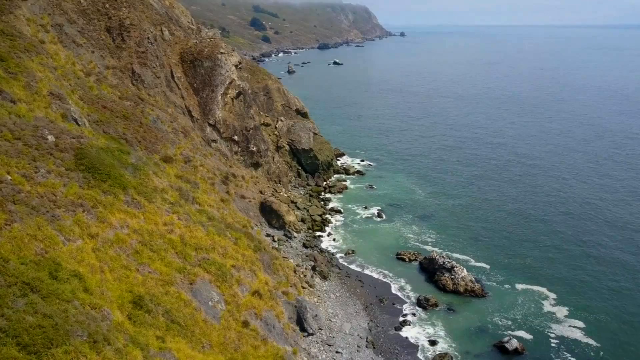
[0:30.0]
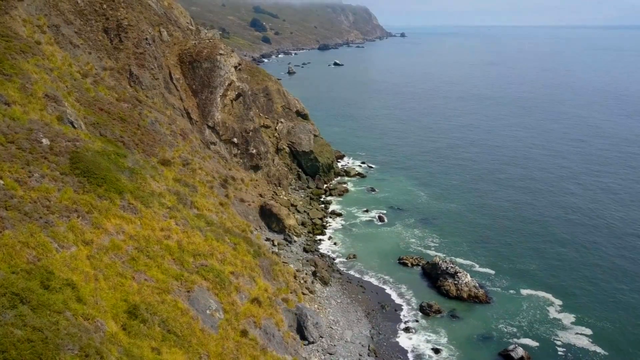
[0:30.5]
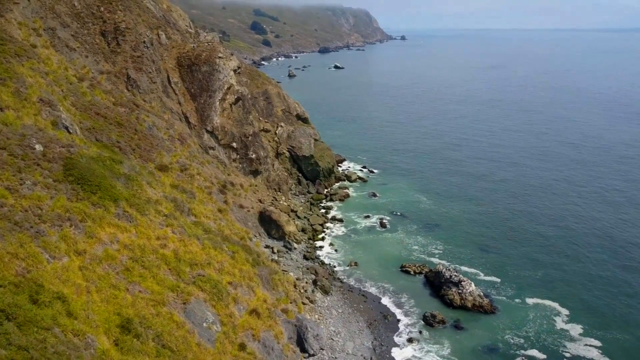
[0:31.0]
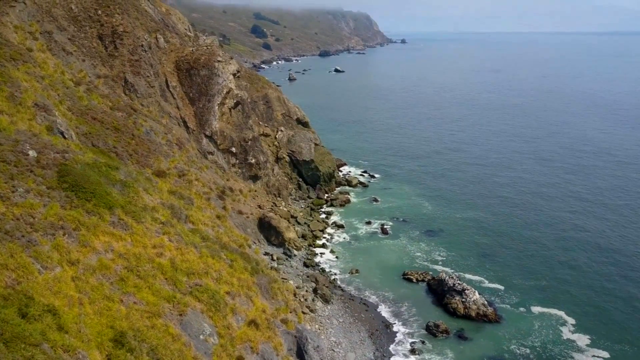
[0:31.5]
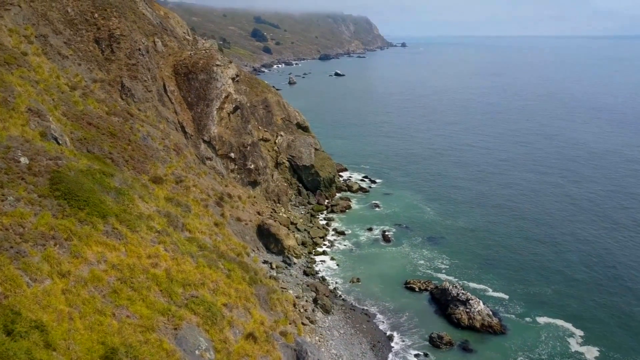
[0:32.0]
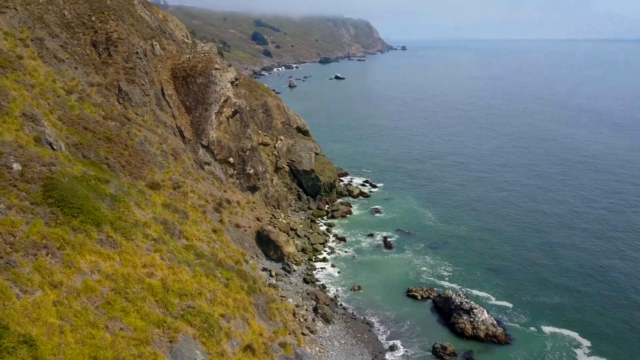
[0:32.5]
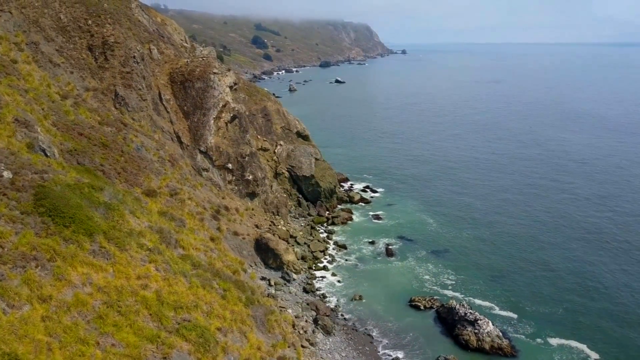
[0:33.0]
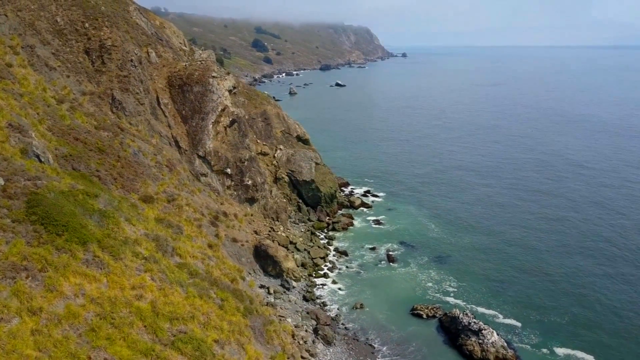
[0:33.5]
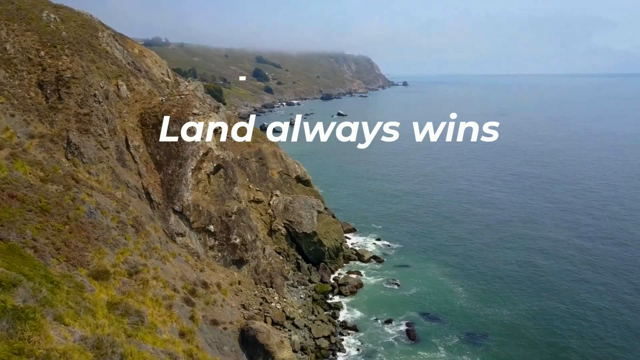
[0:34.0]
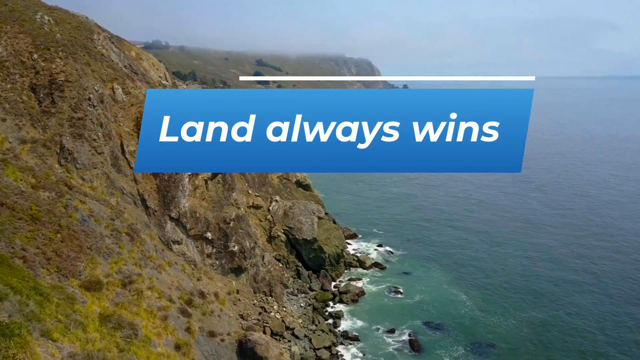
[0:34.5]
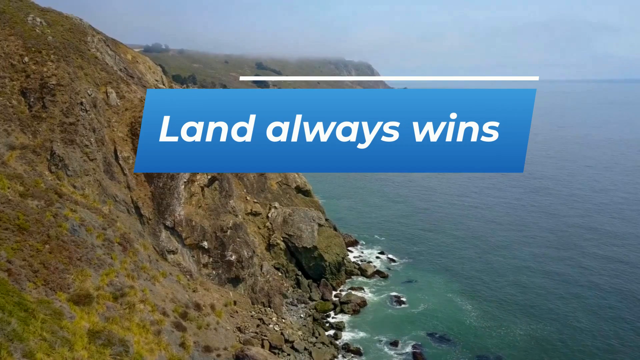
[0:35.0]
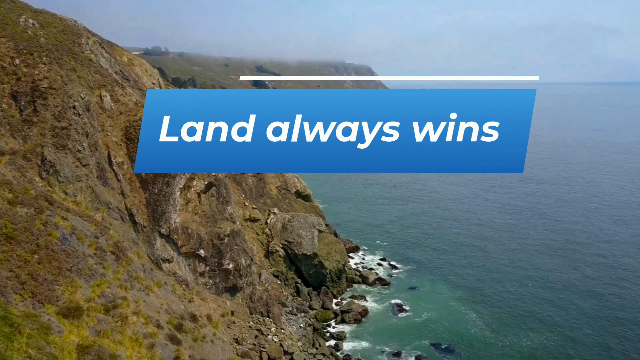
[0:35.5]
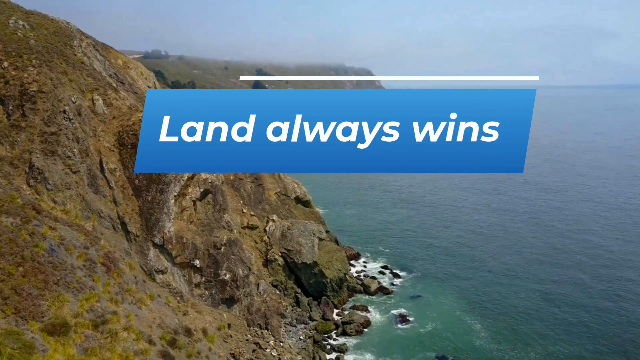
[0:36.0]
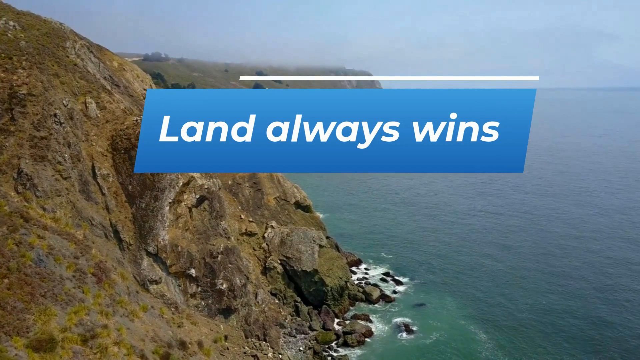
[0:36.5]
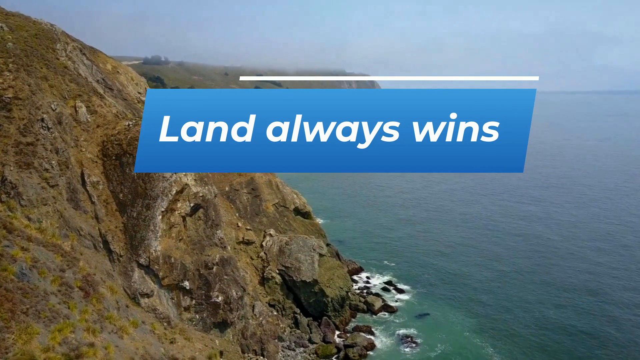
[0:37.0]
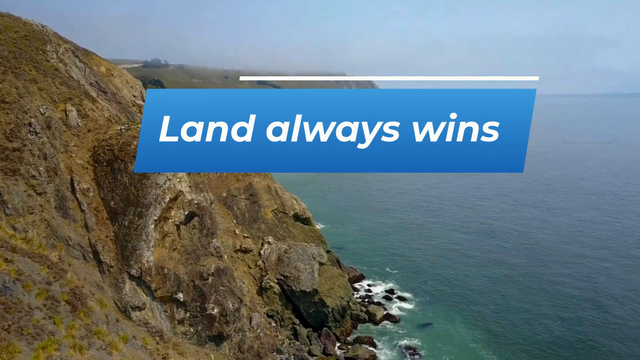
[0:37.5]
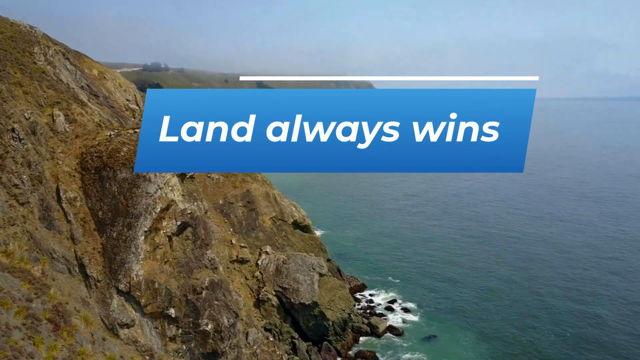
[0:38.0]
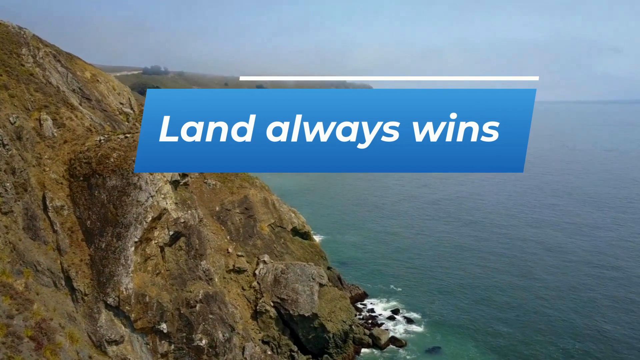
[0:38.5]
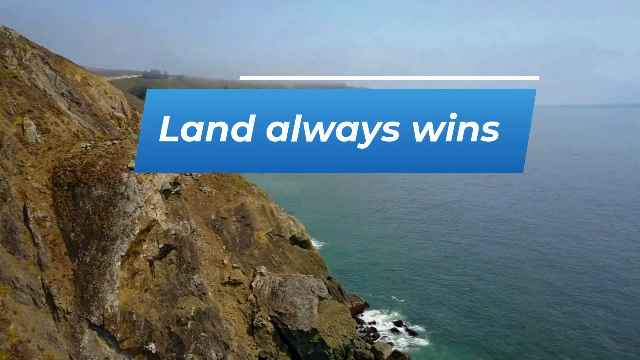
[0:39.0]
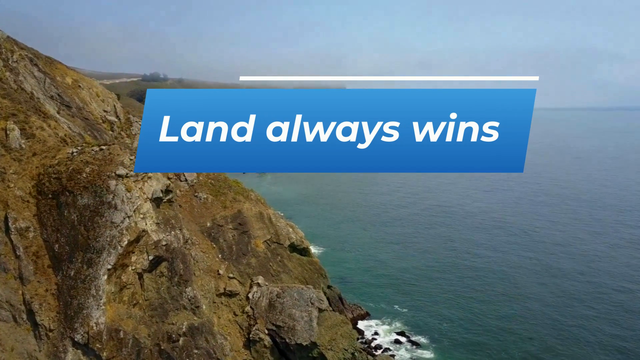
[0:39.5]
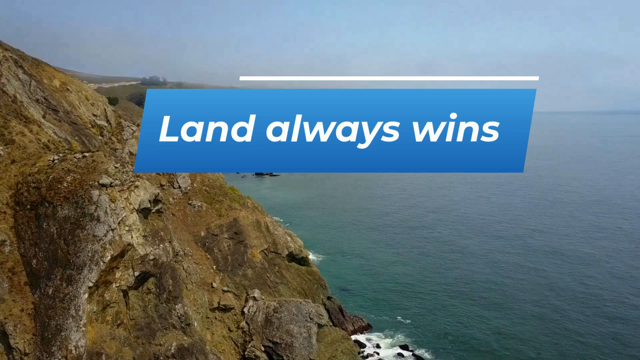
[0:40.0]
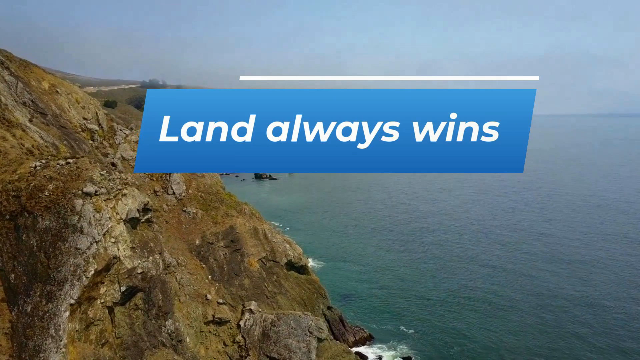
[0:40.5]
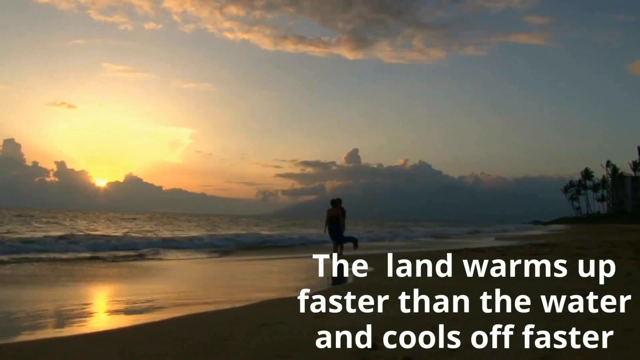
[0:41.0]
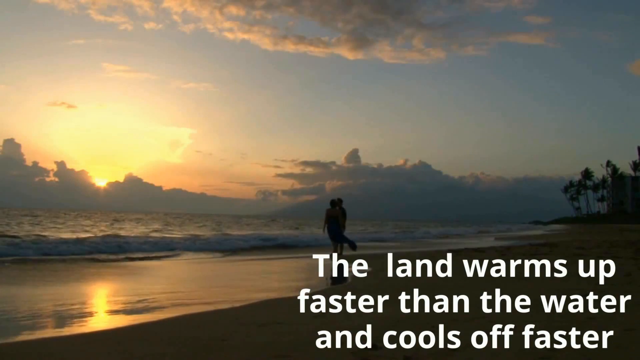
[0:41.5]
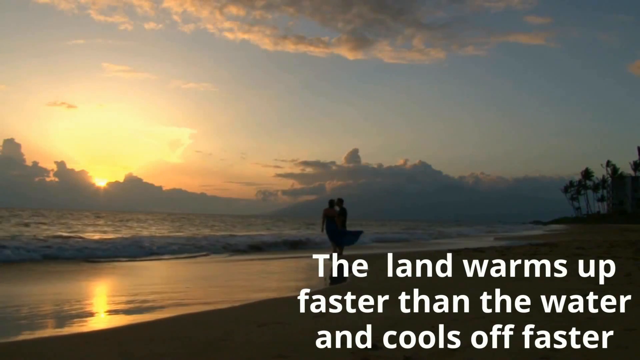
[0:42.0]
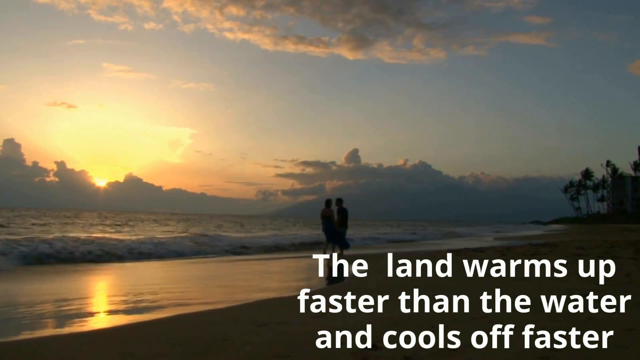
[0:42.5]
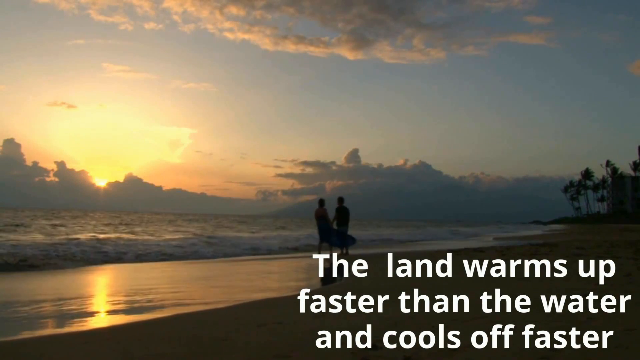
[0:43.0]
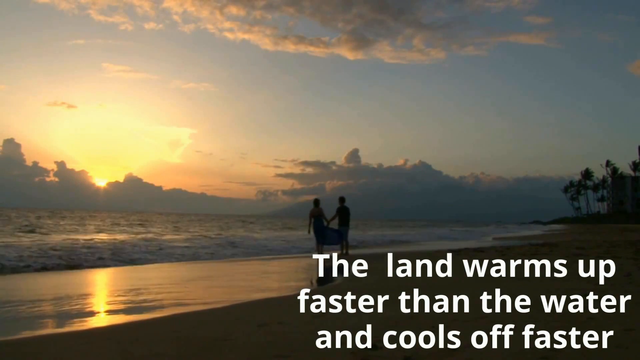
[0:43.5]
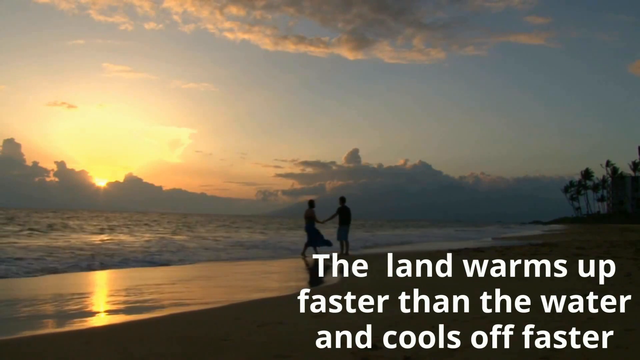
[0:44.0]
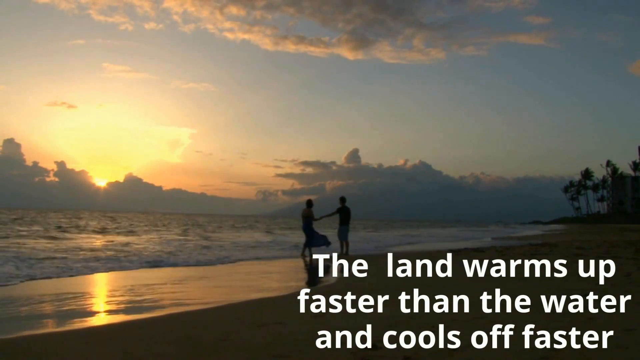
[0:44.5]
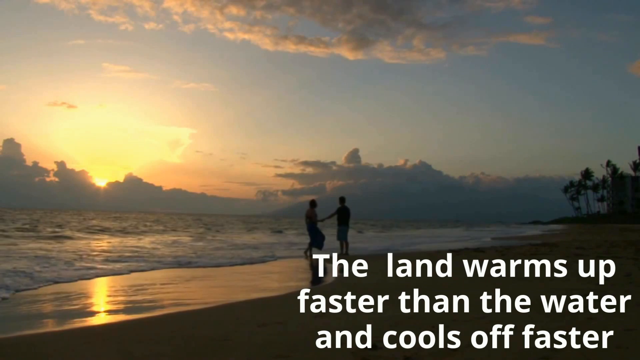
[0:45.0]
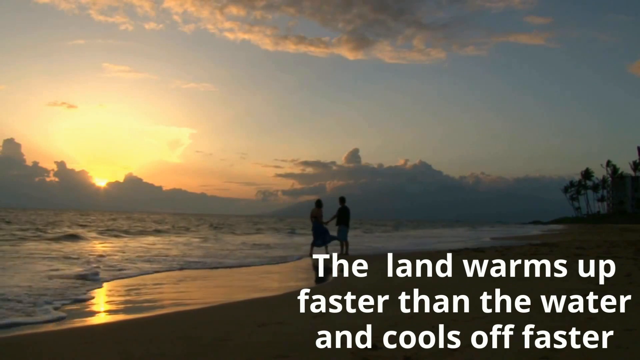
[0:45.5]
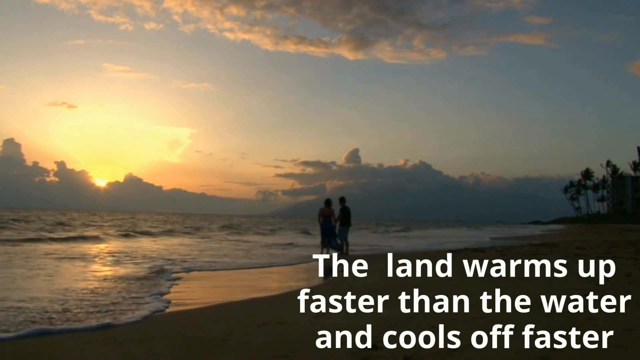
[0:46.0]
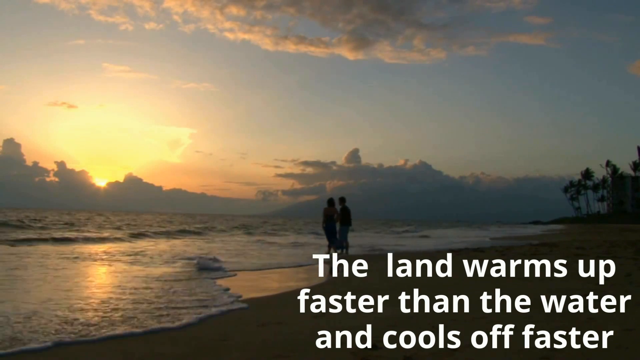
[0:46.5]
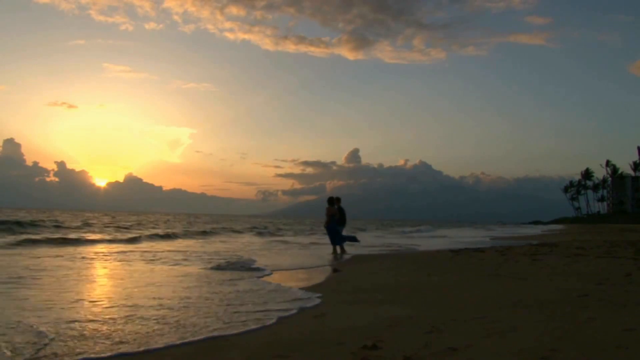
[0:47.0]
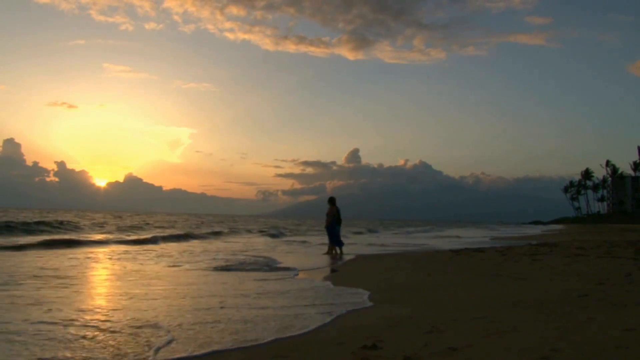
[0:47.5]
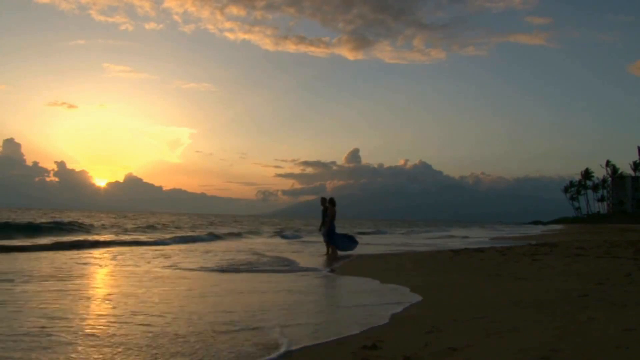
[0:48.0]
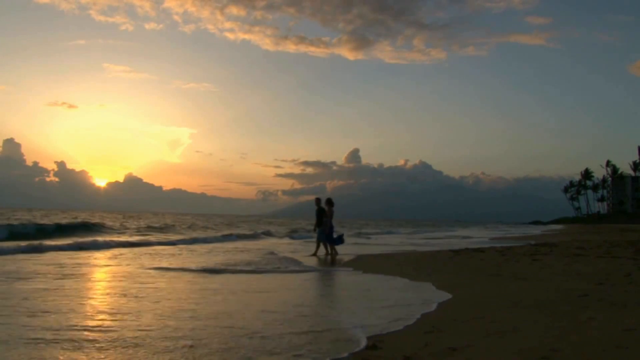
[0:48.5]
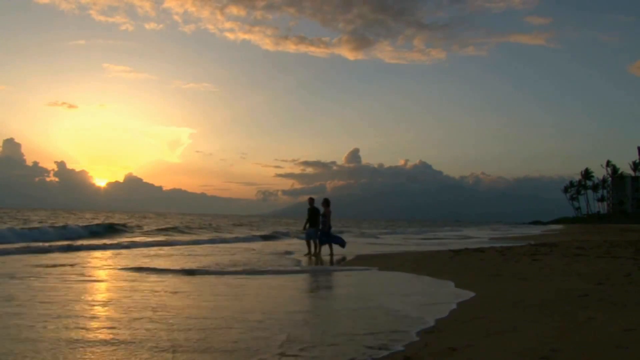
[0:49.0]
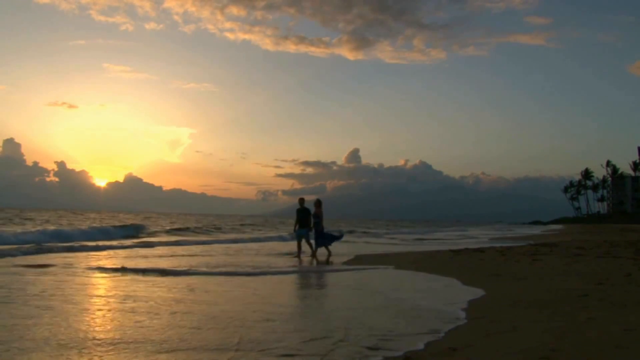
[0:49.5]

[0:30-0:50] An overhead view of a seaside cliff appears, looking as though it was taken from a drone or an airplane. On the left side, a cliff leads down into the hillside; it has grass, marsh, and rocks of various shapes and sizes. The water on the right side is light blue shading into dark blue. A blue banner with white text reads "Land Always Wins", and it remains on screen while the aerial shot of the cliffside continues. The video then pans to a couple walking on the beach during sunset, and the text "the land warms up faster than the water and cools off faster" appears in white at the bottom right.